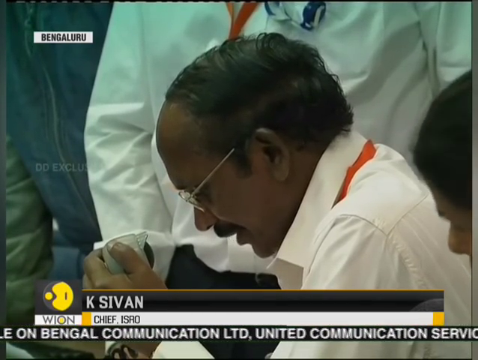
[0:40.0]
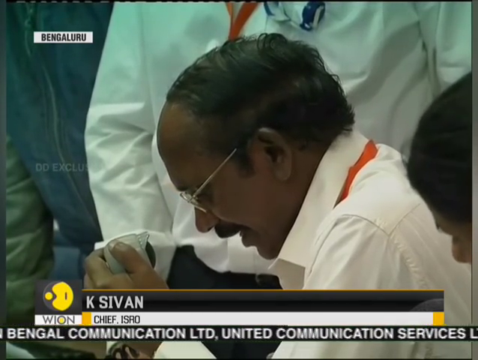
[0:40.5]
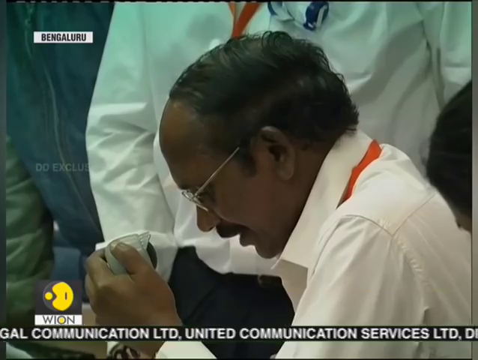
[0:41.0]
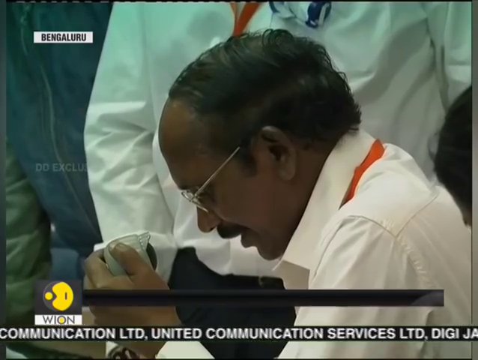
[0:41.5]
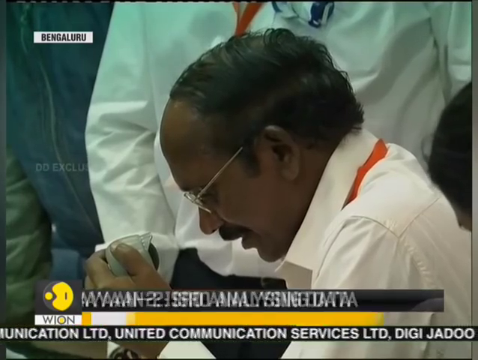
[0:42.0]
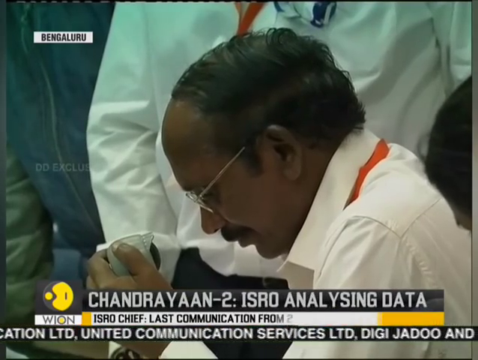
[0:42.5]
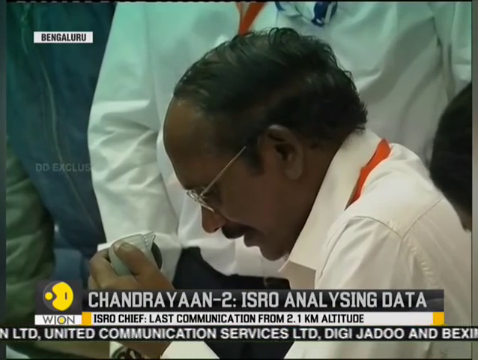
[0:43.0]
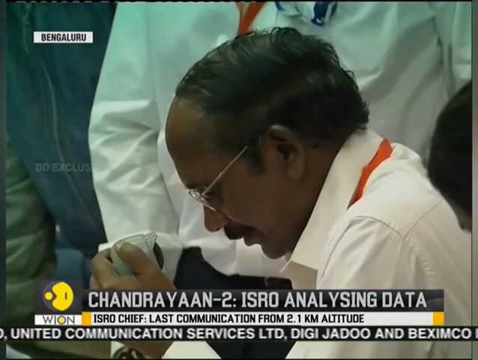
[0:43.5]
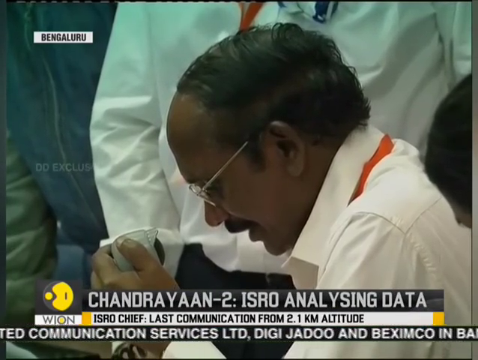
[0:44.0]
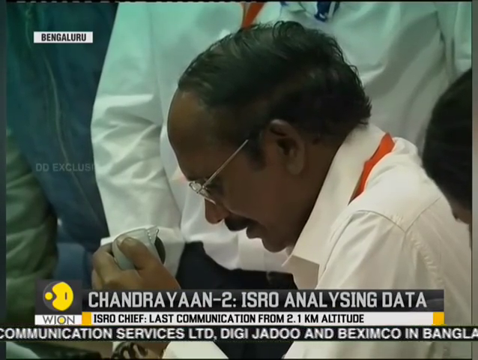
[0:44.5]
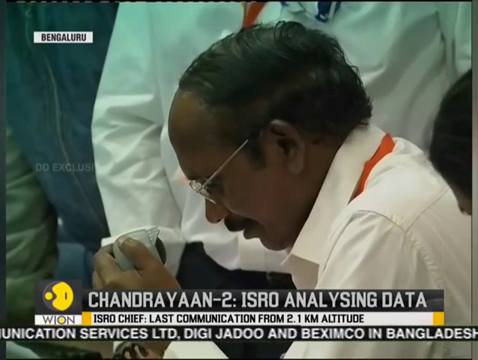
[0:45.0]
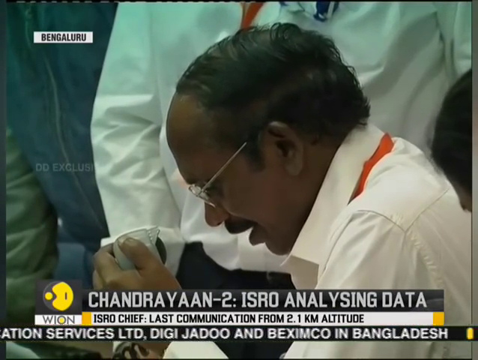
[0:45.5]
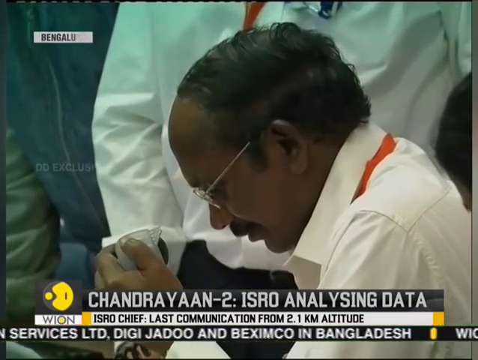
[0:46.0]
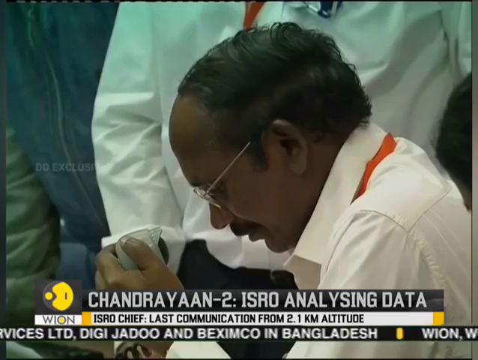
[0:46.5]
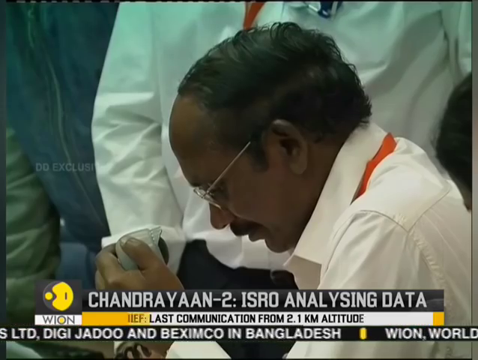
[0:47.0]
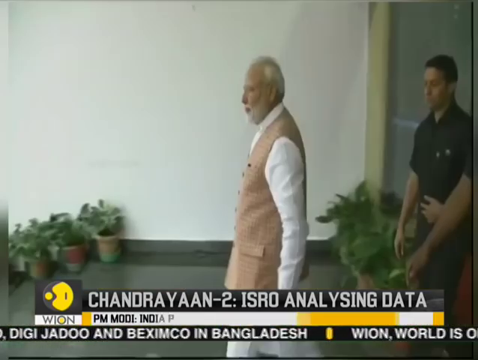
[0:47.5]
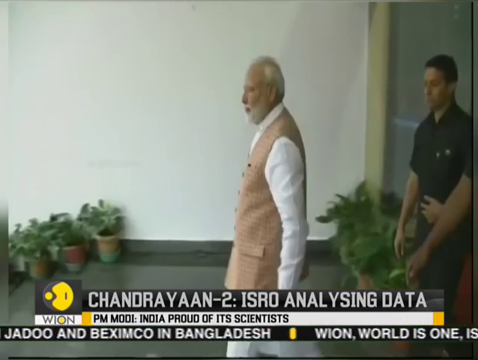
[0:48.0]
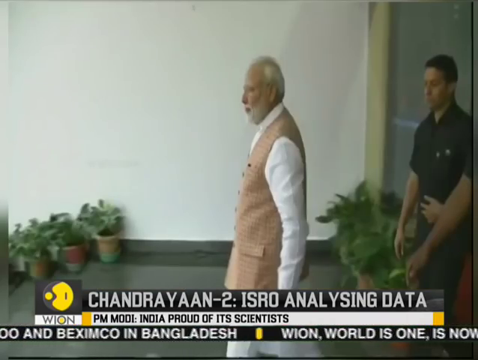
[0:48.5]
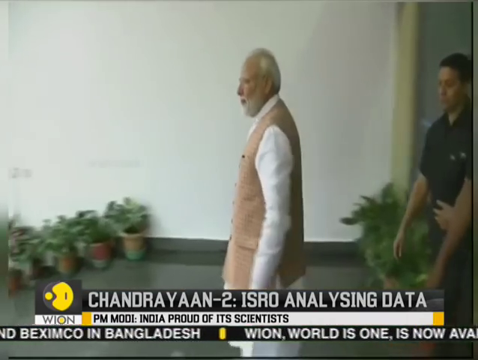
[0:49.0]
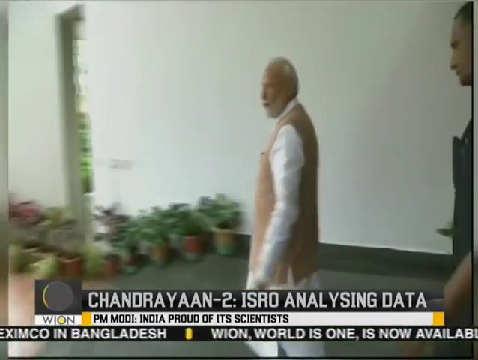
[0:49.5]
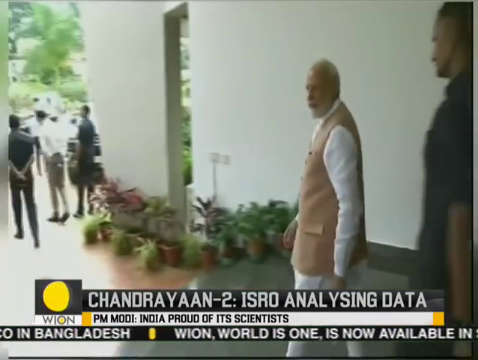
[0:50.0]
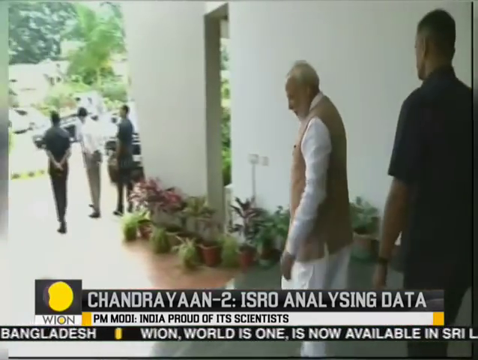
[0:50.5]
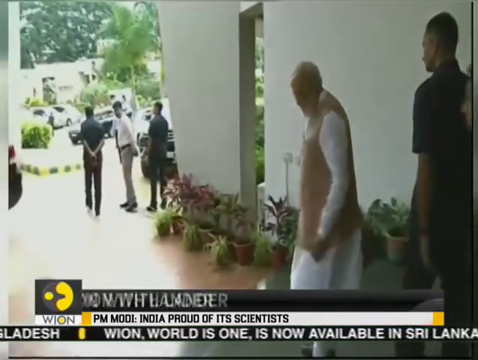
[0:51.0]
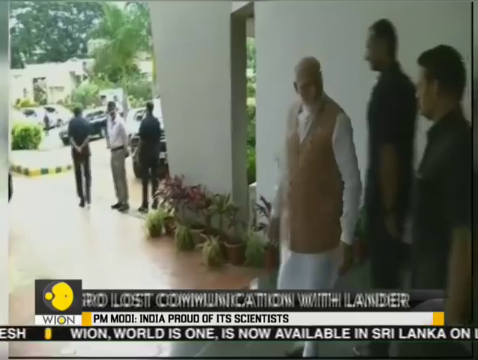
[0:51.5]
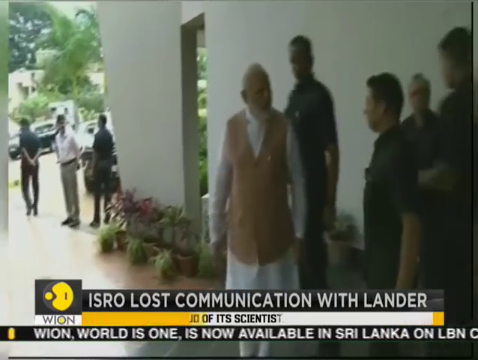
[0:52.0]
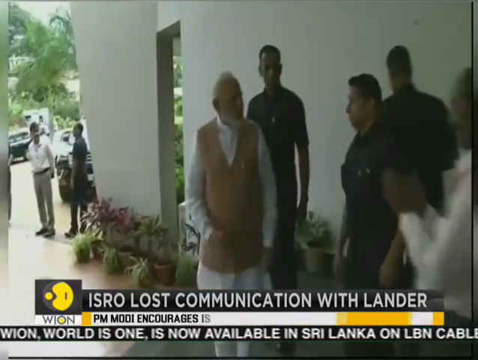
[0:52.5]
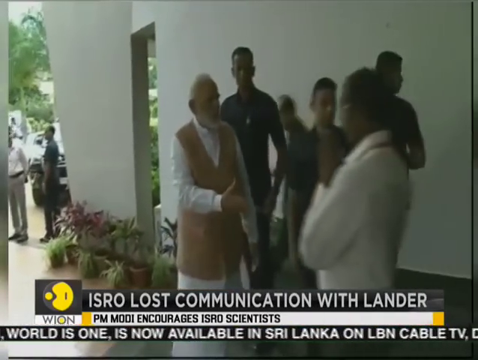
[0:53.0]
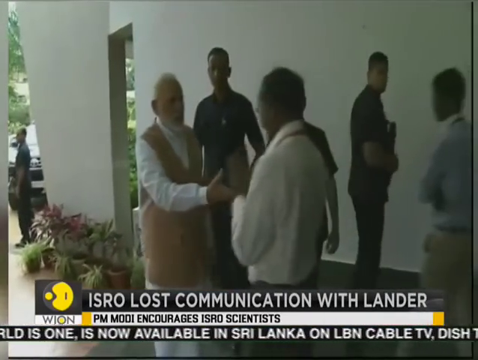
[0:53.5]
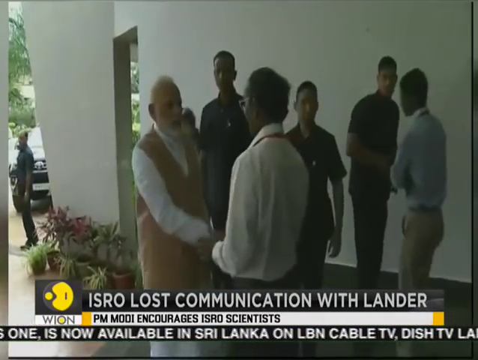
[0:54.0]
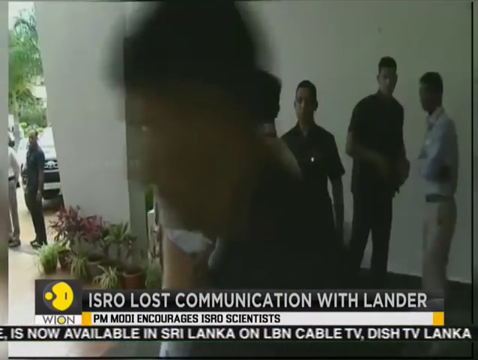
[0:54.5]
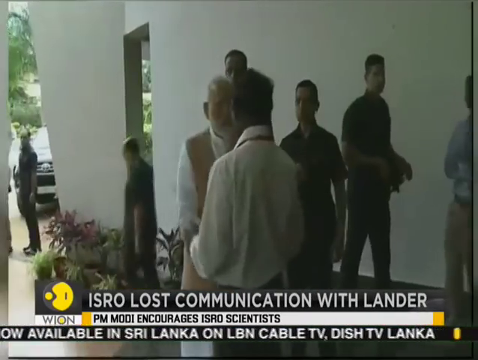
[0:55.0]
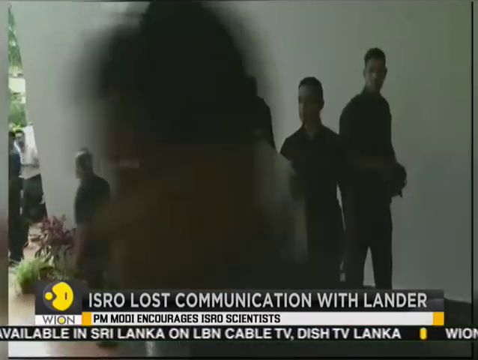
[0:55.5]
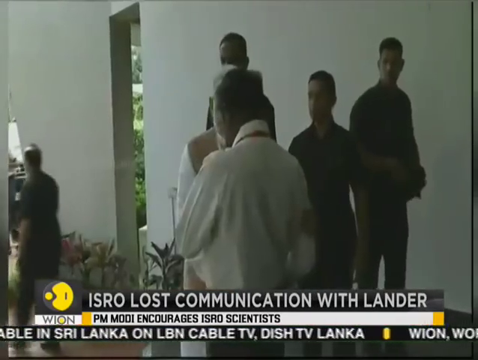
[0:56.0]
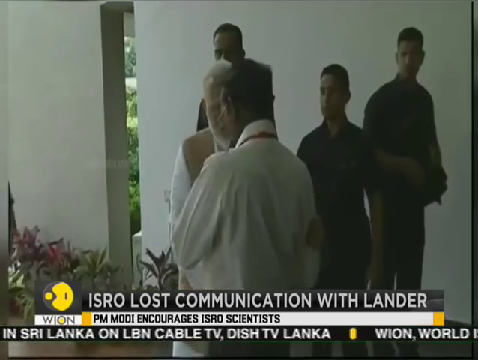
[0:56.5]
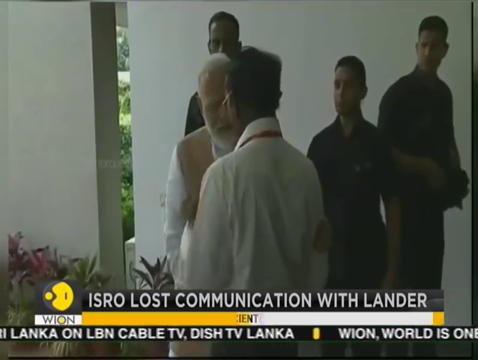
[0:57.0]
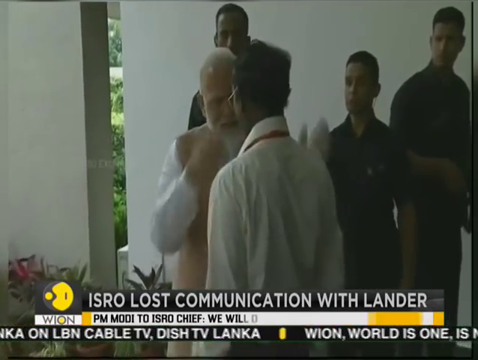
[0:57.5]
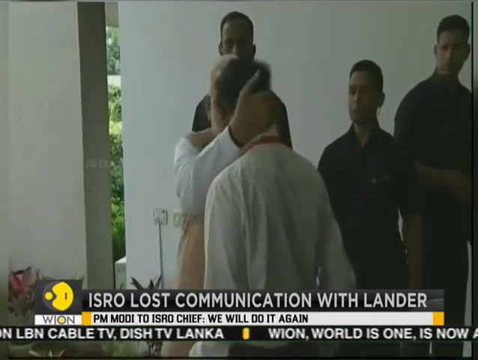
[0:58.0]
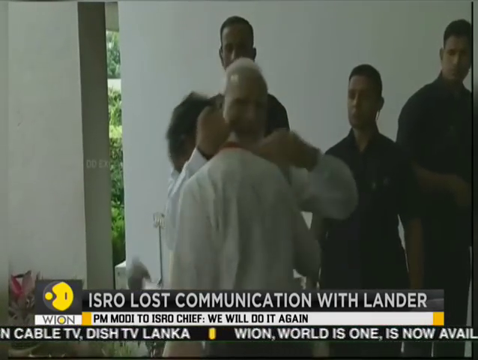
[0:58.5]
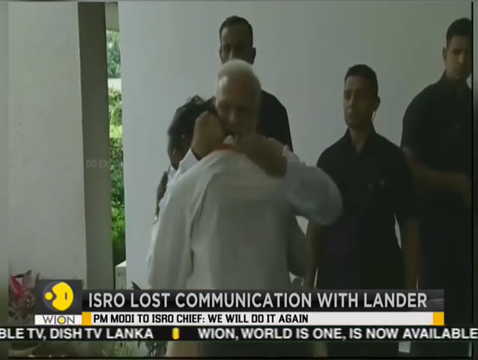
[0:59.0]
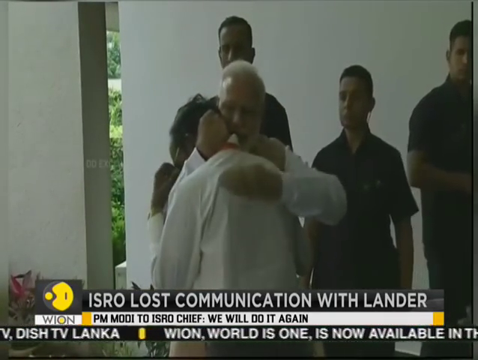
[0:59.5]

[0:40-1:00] In the WION (World is One) News report about the Chandrayaan moon landing rocket, ISRO chief K. Shivan talks into a type of microphone, and Modi is there. Modi is then shown on what is apparently a different day, wearing a different waistcoat, a tan vest, and he hugs Shivan. Text indicates the location is Bengaluru. The same scene is shown over and over.